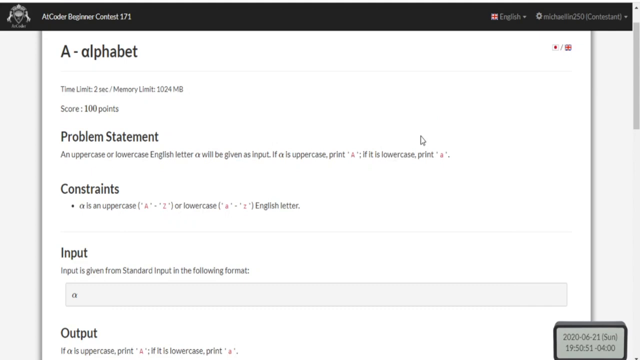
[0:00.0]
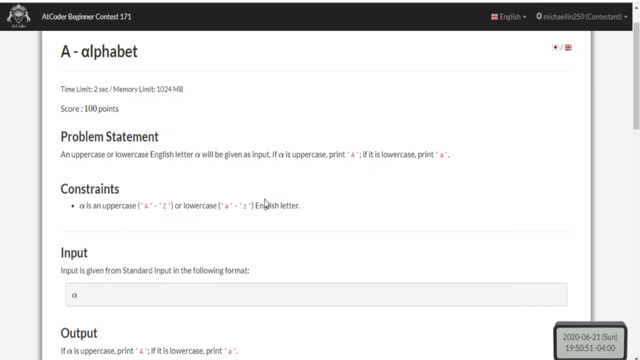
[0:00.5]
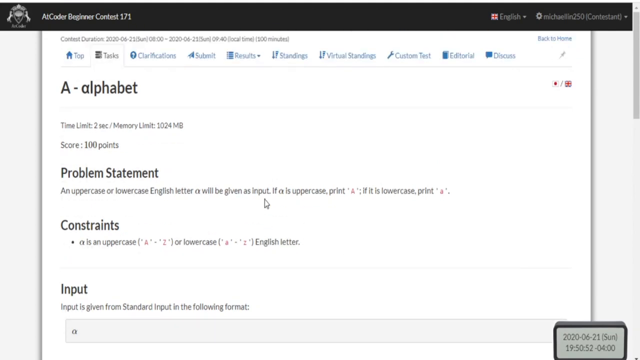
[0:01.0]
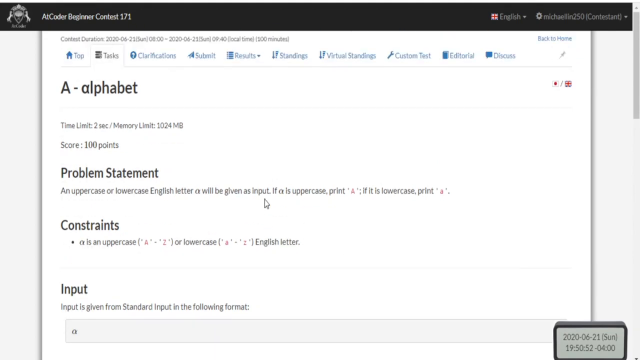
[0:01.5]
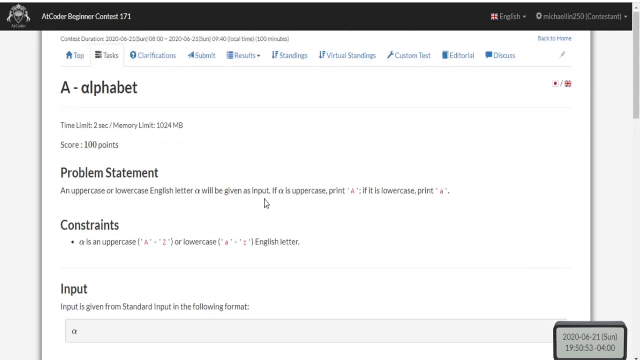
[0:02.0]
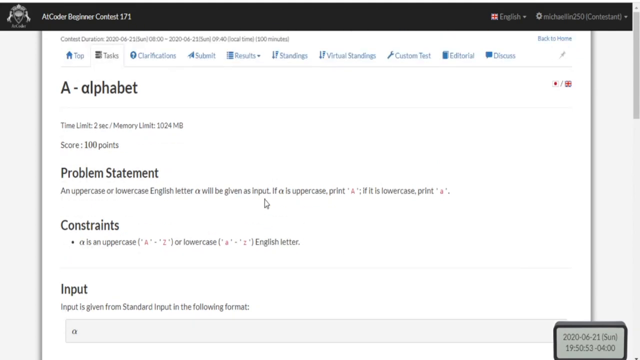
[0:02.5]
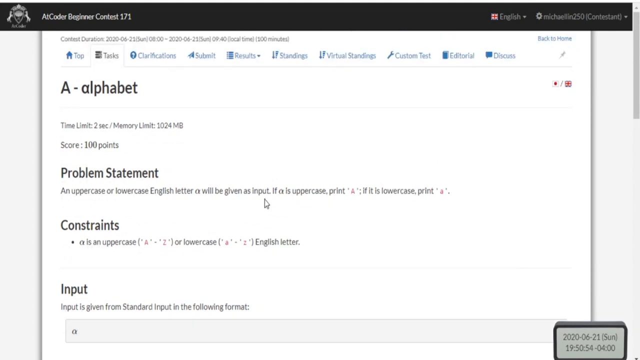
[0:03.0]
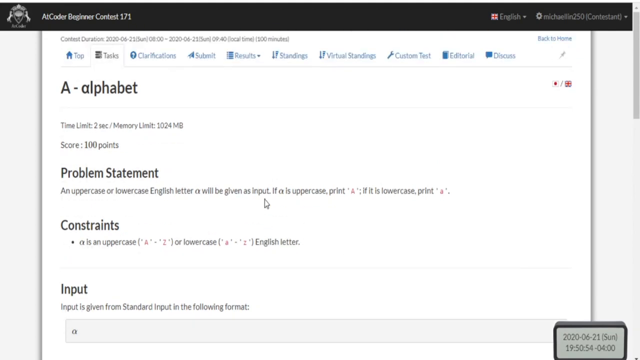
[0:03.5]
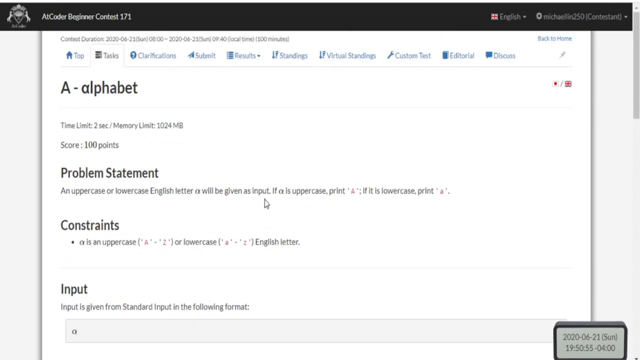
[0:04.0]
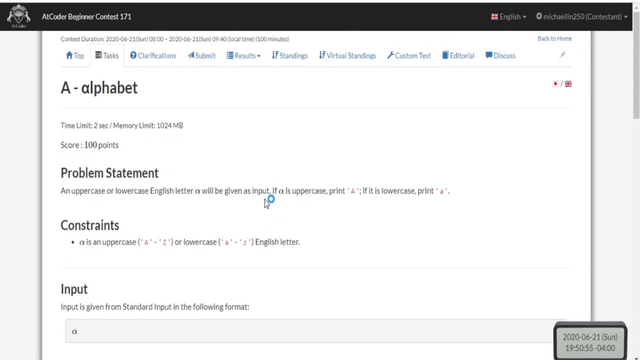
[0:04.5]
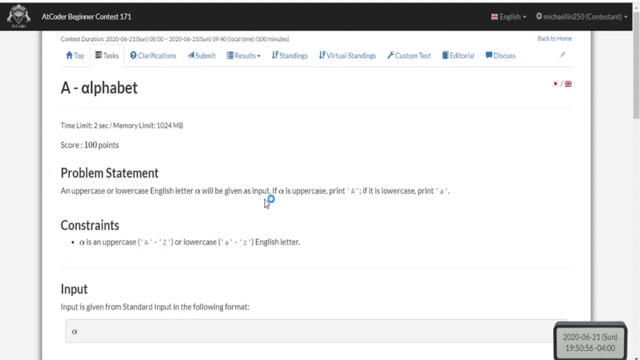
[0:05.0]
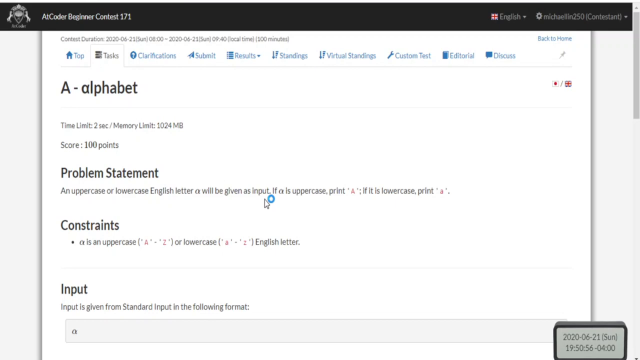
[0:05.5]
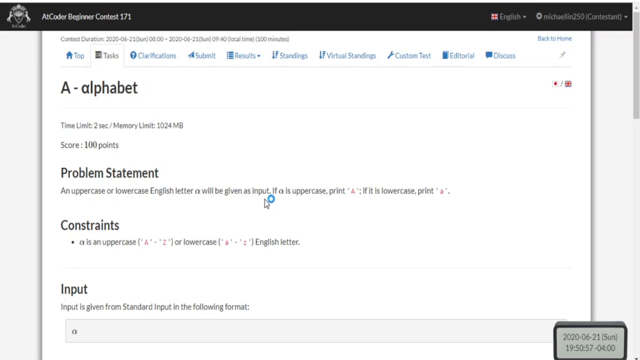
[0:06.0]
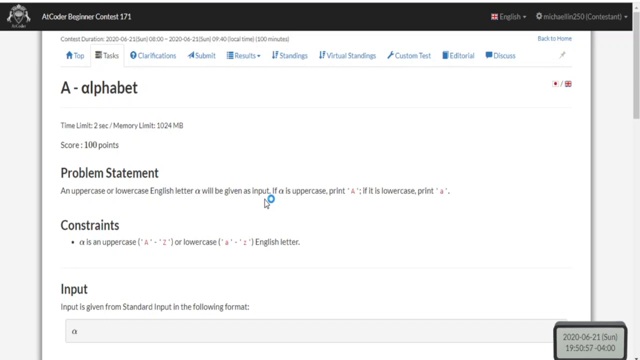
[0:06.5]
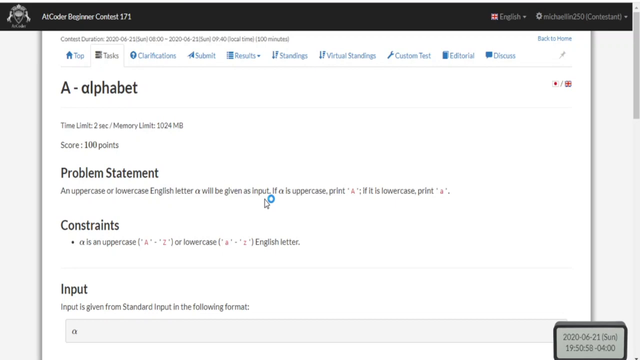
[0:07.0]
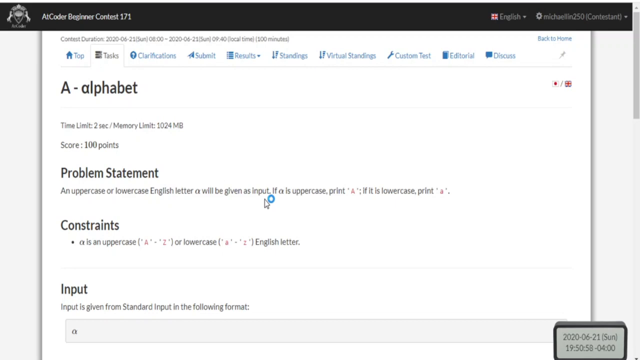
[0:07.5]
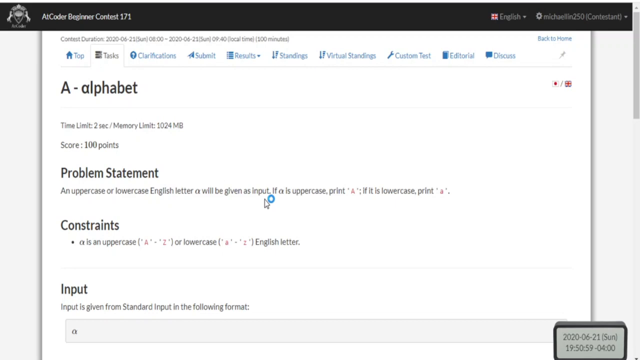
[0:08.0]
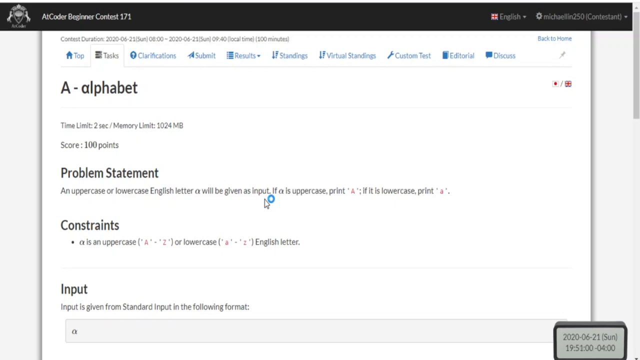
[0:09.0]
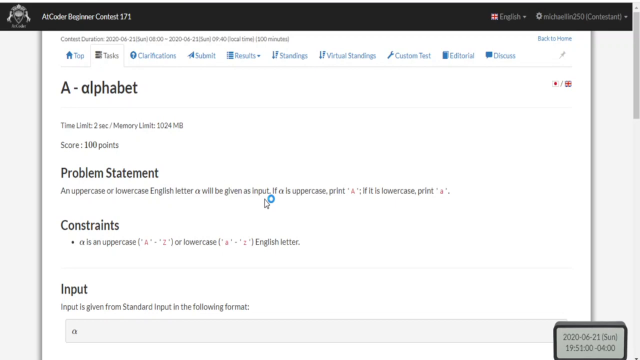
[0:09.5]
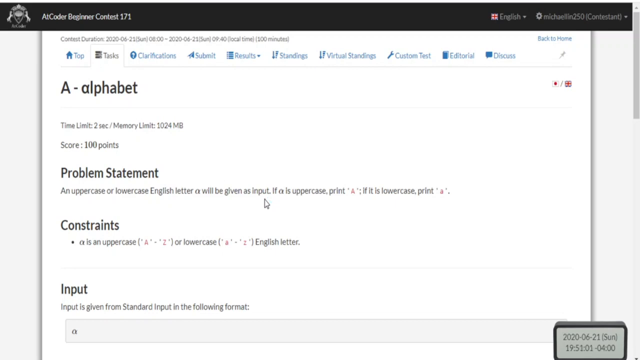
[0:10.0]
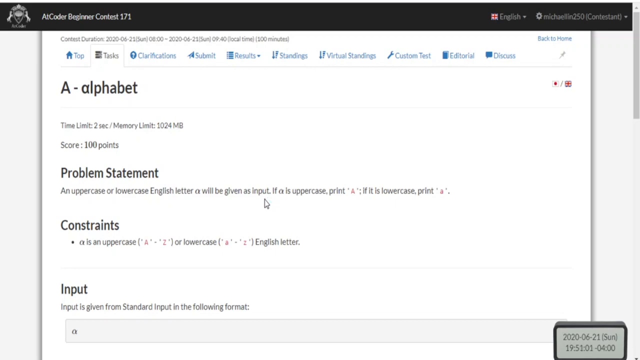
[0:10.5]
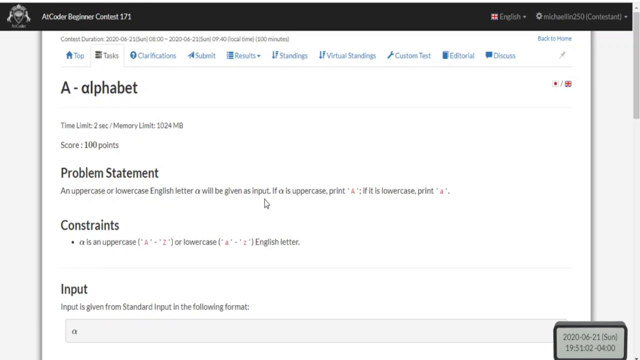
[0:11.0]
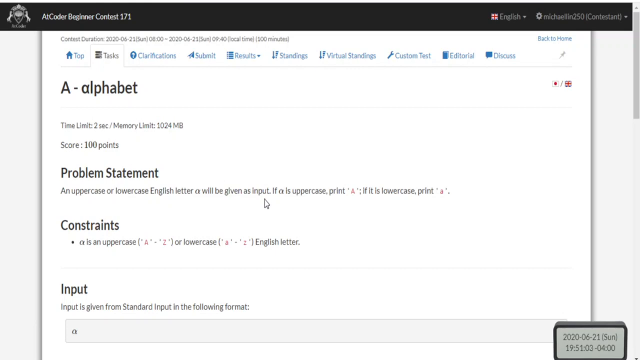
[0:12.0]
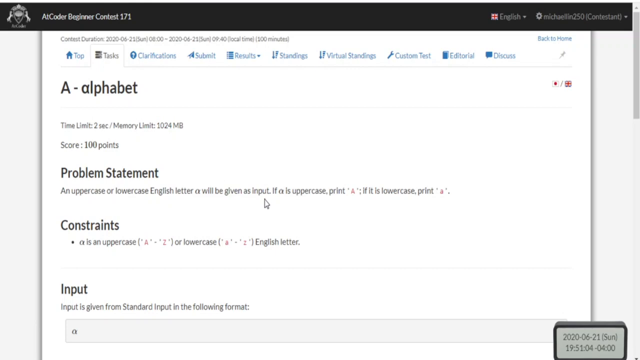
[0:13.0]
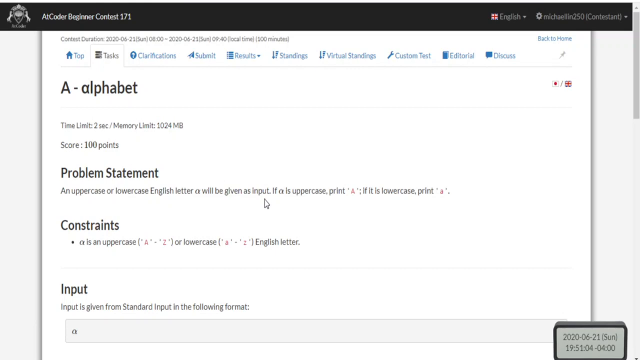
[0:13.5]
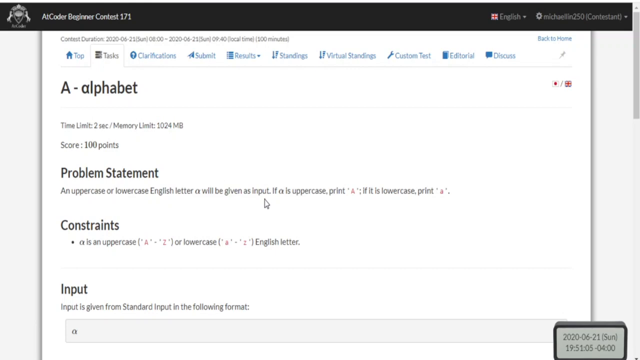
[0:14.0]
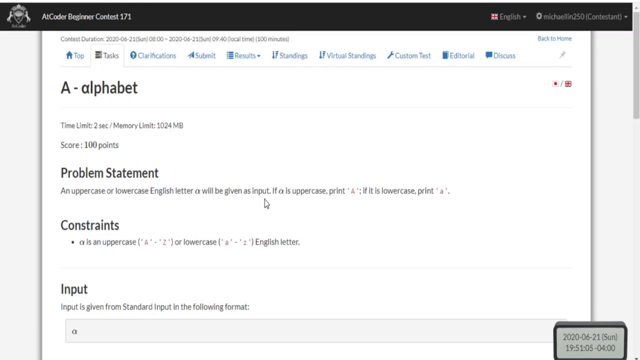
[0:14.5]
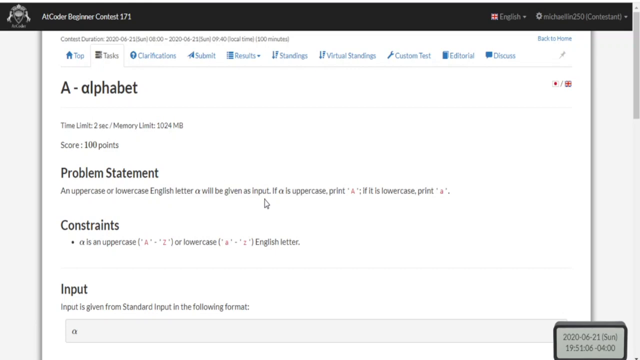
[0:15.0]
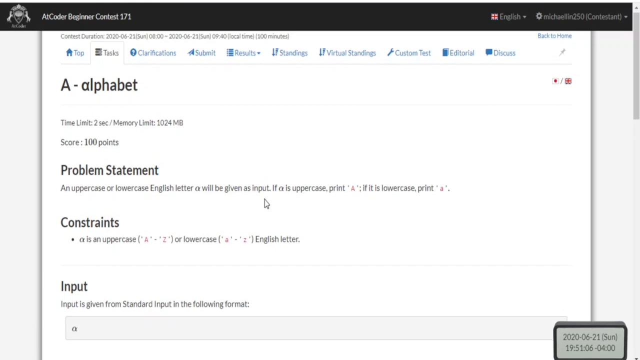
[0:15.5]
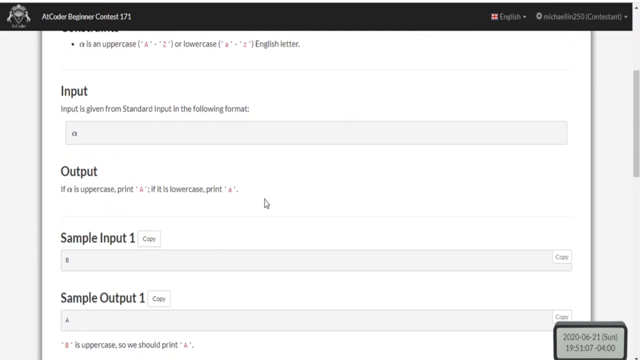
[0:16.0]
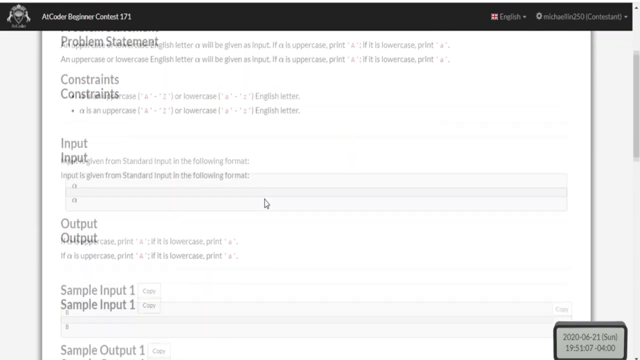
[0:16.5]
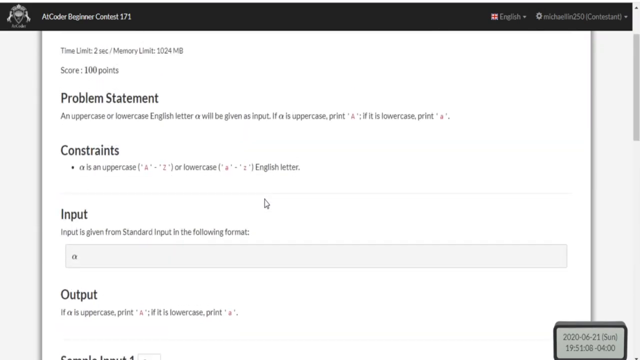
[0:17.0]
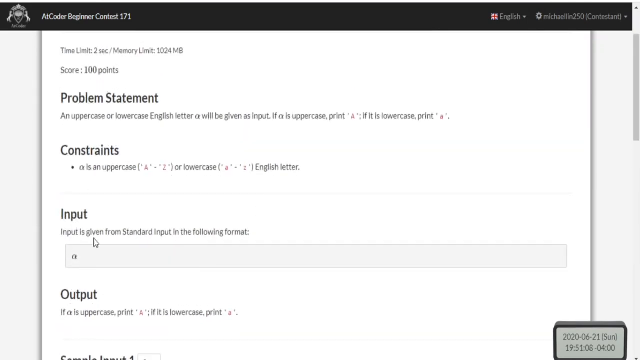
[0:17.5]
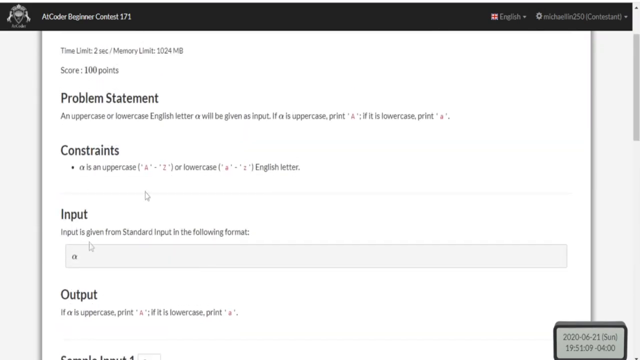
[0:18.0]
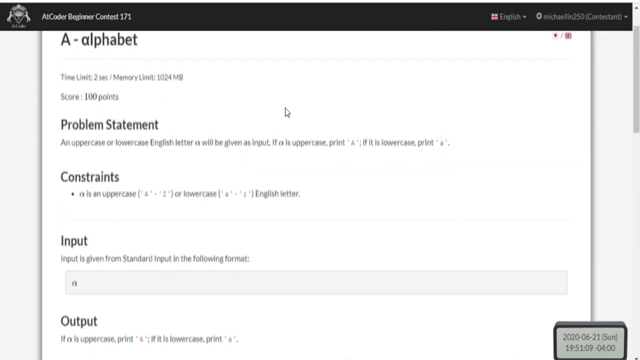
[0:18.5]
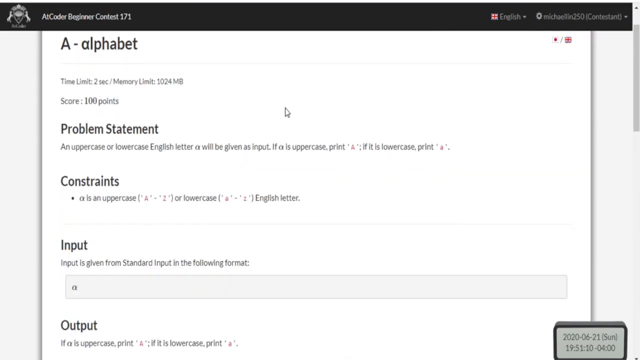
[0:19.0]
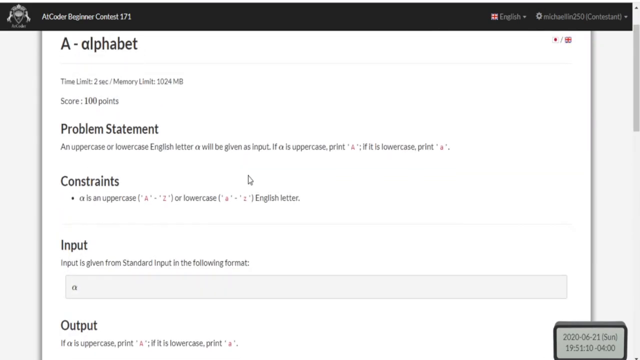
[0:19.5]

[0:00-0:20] The video, slightly wider than it is tall, shows a screen, possibly a computer. At the top is a black banner that reads "AI Coder Beginner Contest 171." In the upper right are some drop-downs; English appears to be selected, along with a username, and in parentheses it says "contestant." Below are a number of tabs: "Top," "Task," "Clarification," "Submit," "Results," "Standings," "Virtual Settings," "Custom Test," "Editorial," and "Discussions." The rest of the page looks like a white sheet of paper. It reads "A Alphabet," then "Time Limit 2 Seconds Memory Limit 1024 megabytes," "Score 100 points," "Problem statement," "An uppercase or lowercase English letter will be given as input," and "Constraints. A is an uppercase A through Z or lowercase A through Z English letter." The video stays on this page for a number of seconds.